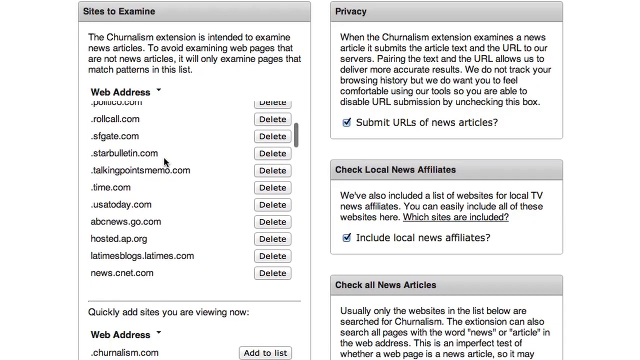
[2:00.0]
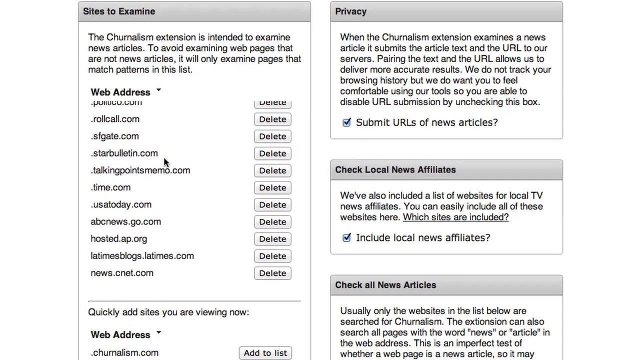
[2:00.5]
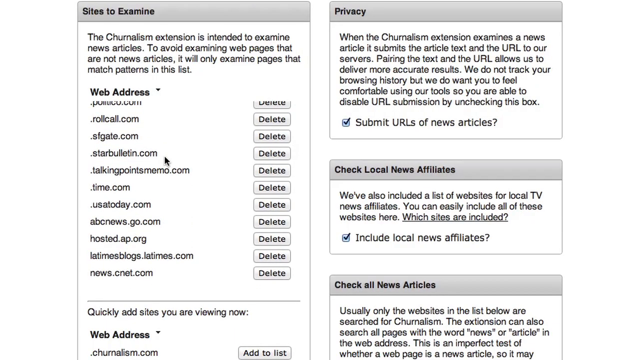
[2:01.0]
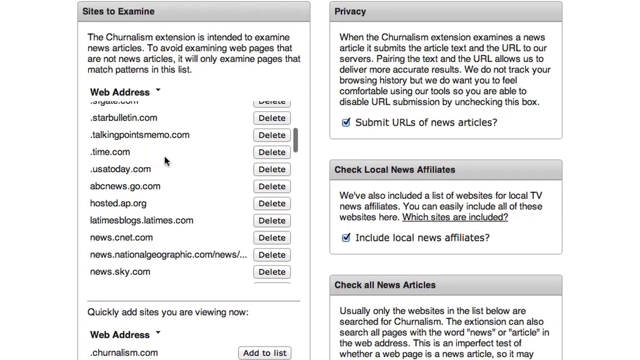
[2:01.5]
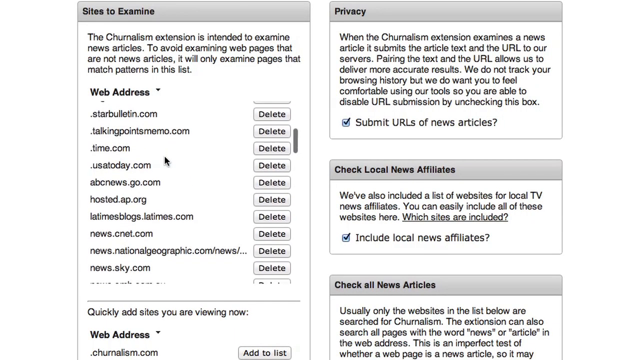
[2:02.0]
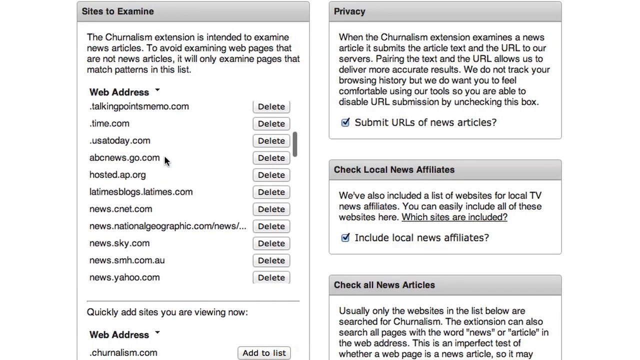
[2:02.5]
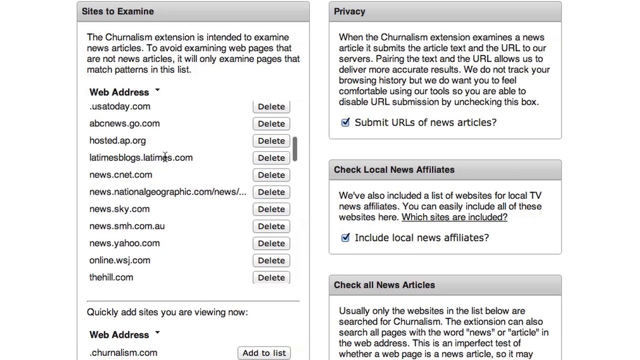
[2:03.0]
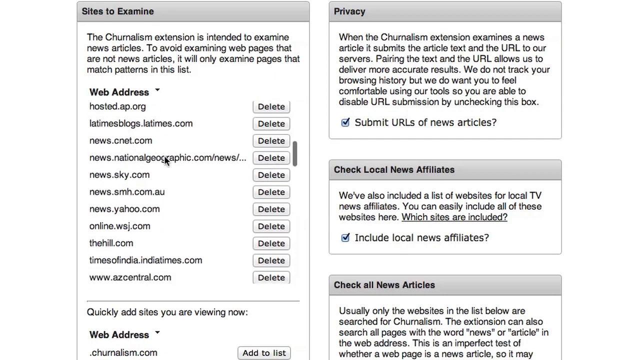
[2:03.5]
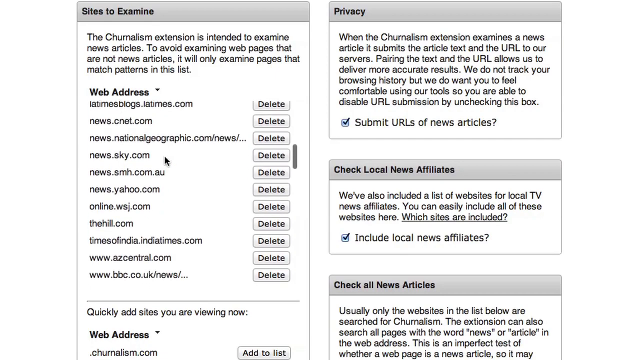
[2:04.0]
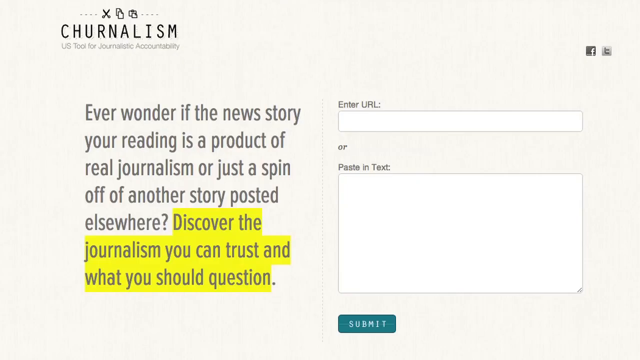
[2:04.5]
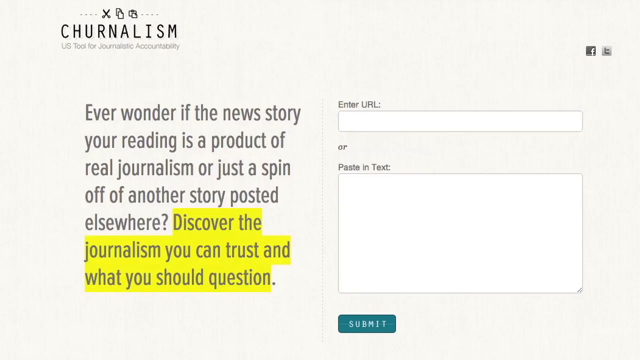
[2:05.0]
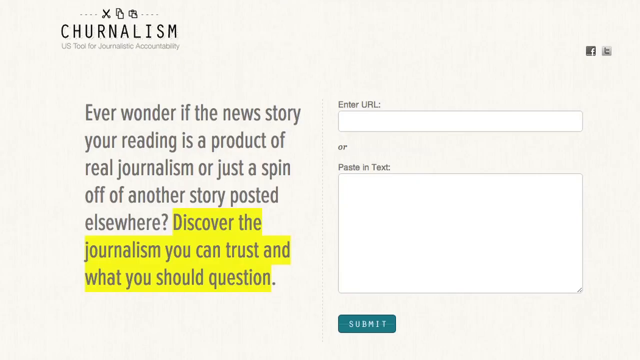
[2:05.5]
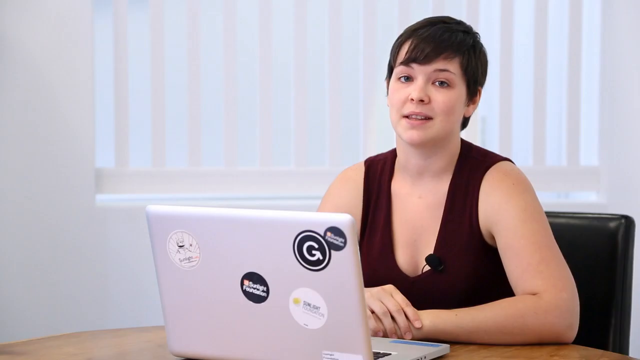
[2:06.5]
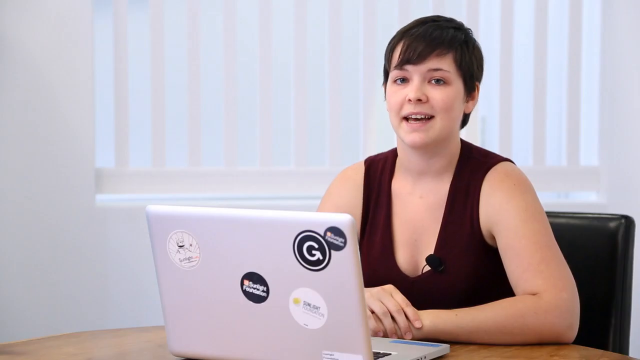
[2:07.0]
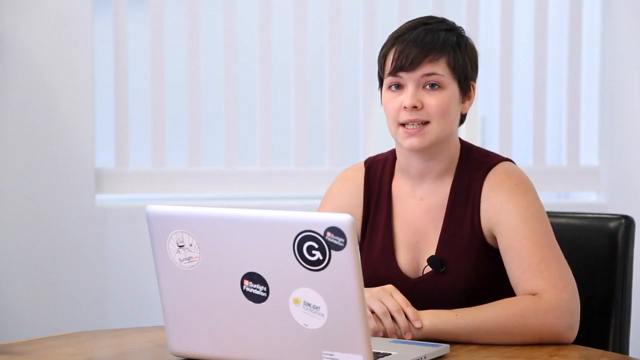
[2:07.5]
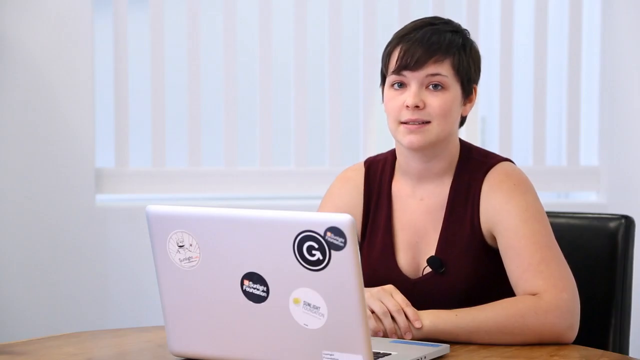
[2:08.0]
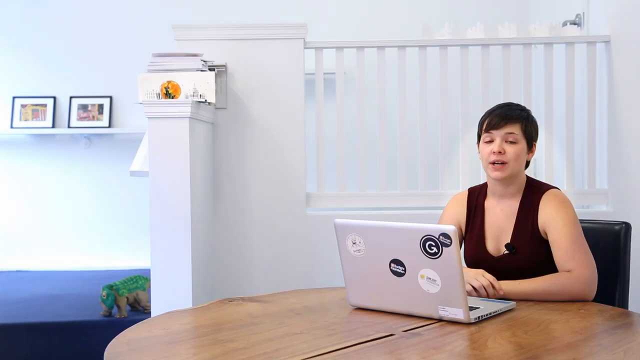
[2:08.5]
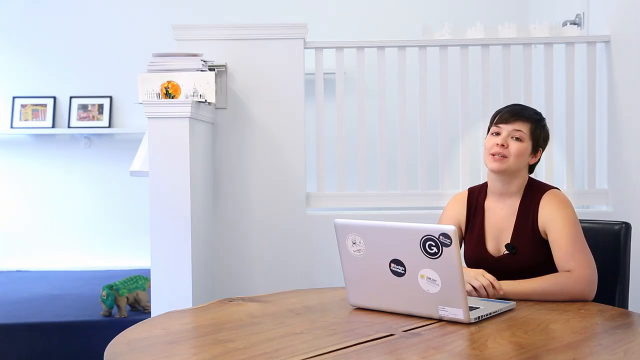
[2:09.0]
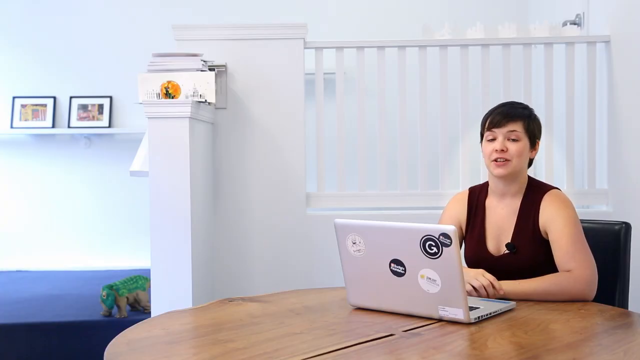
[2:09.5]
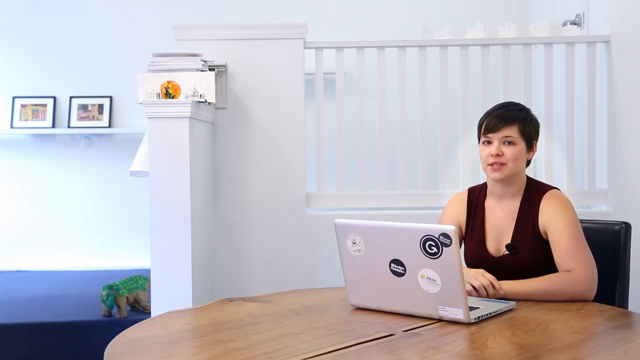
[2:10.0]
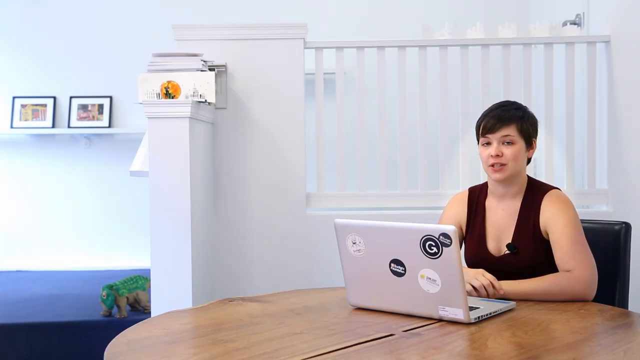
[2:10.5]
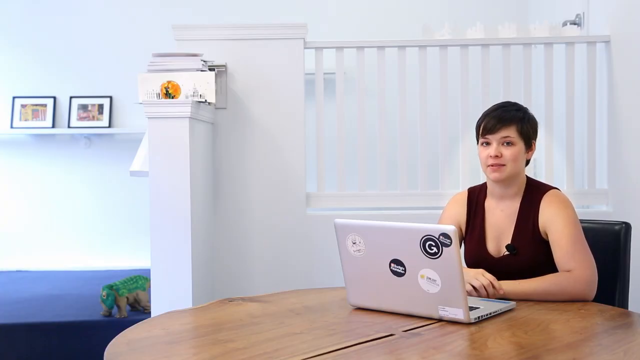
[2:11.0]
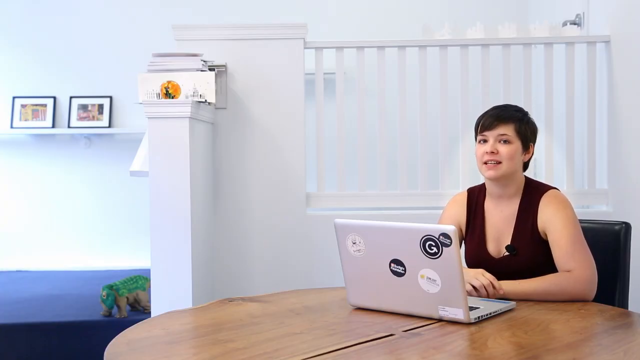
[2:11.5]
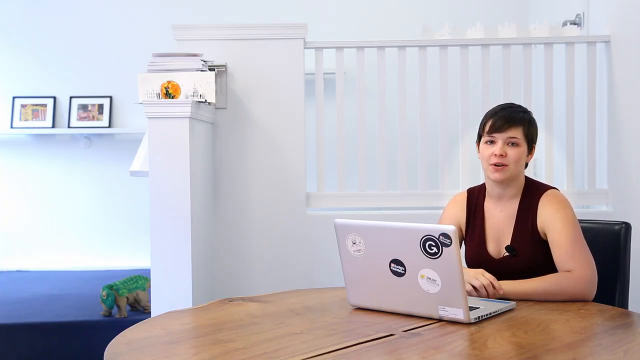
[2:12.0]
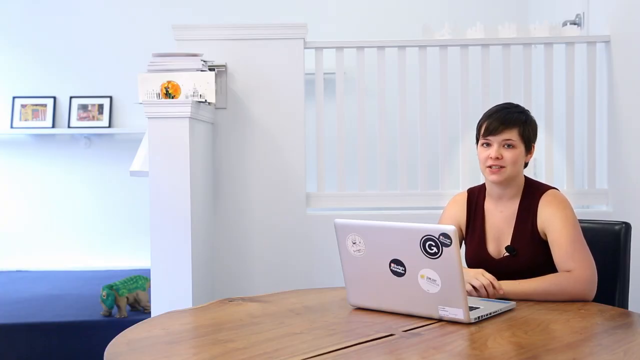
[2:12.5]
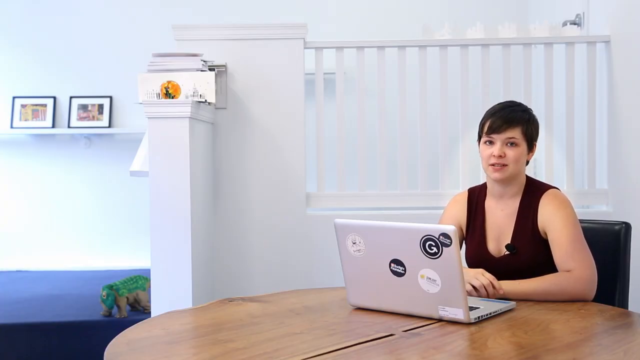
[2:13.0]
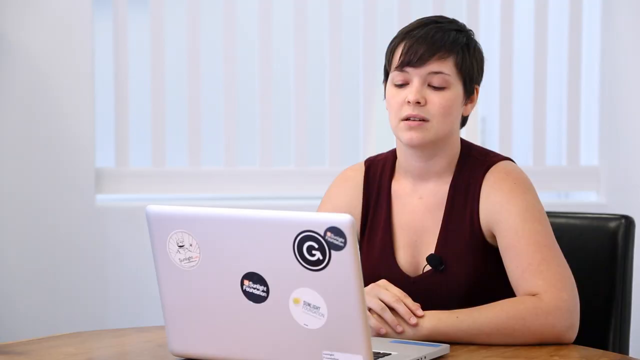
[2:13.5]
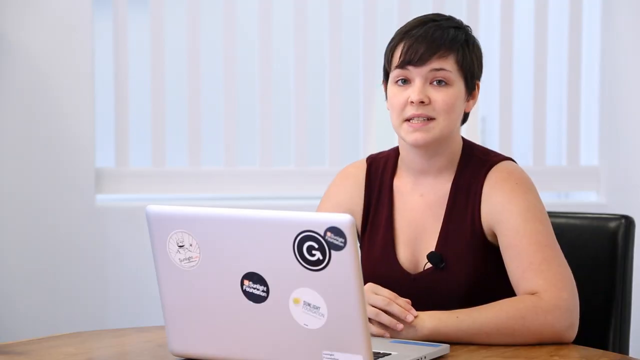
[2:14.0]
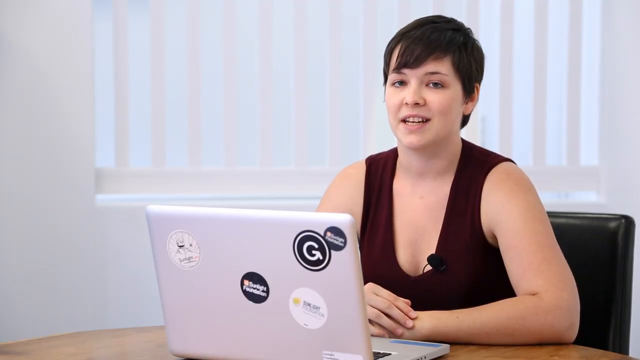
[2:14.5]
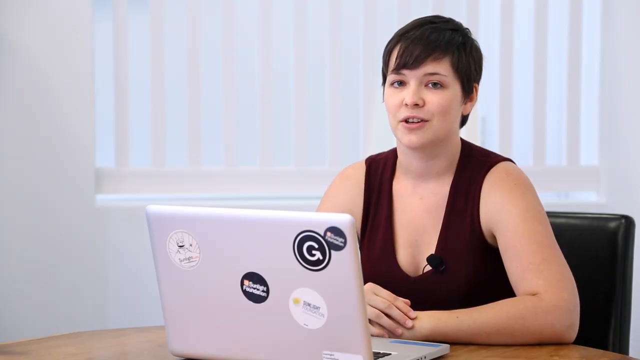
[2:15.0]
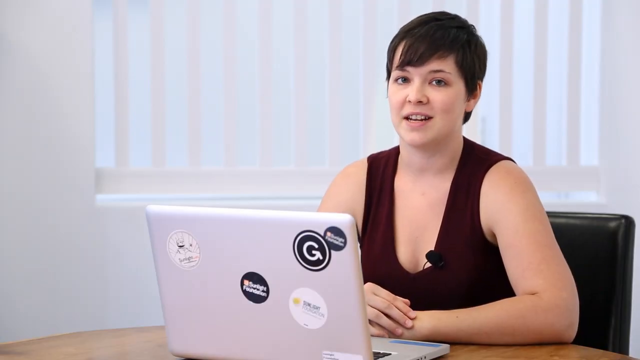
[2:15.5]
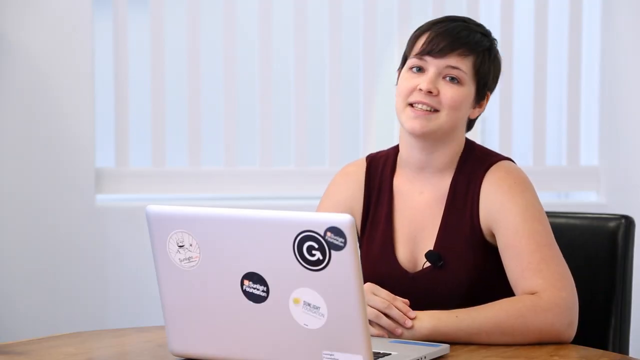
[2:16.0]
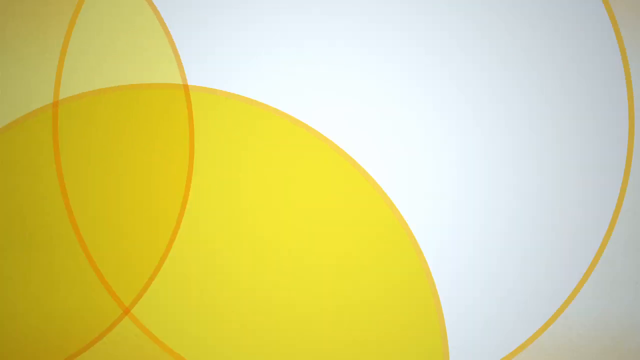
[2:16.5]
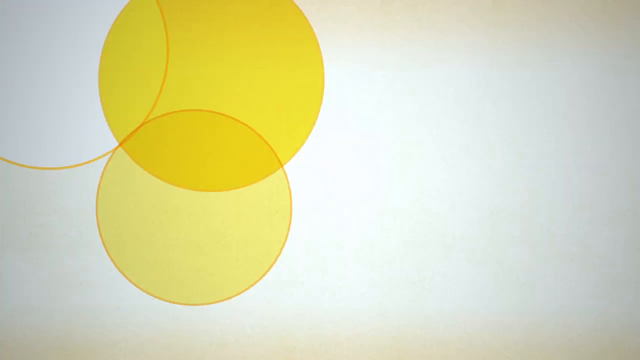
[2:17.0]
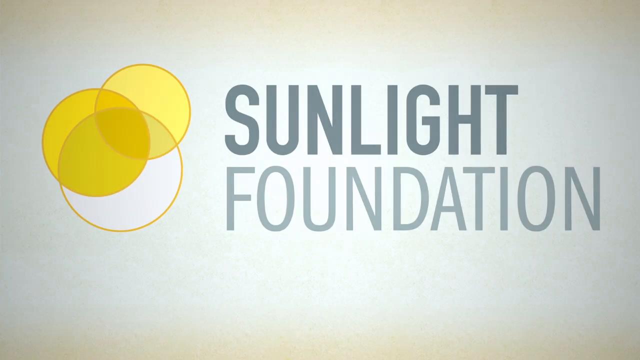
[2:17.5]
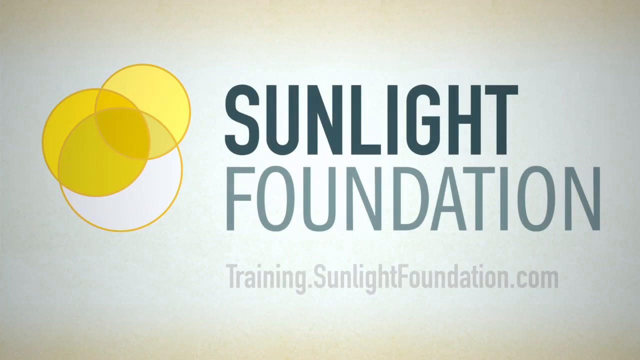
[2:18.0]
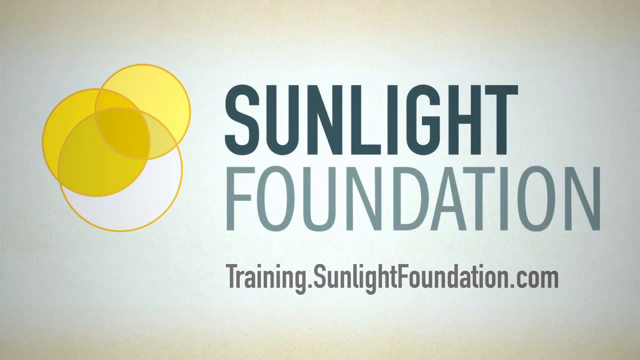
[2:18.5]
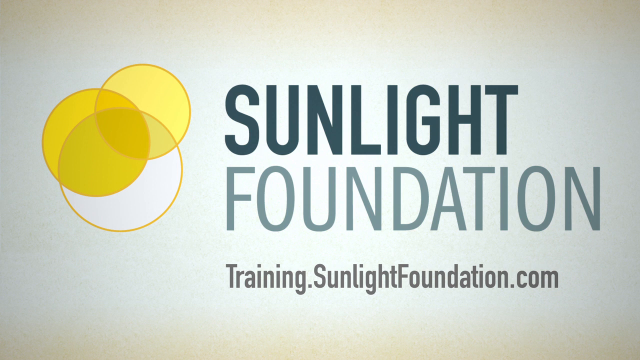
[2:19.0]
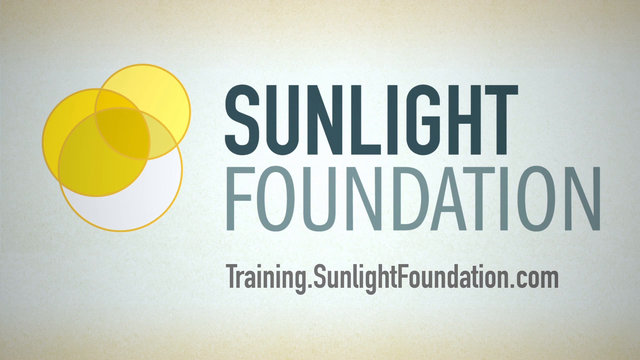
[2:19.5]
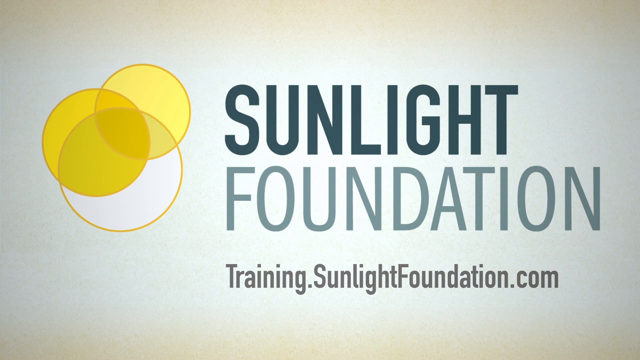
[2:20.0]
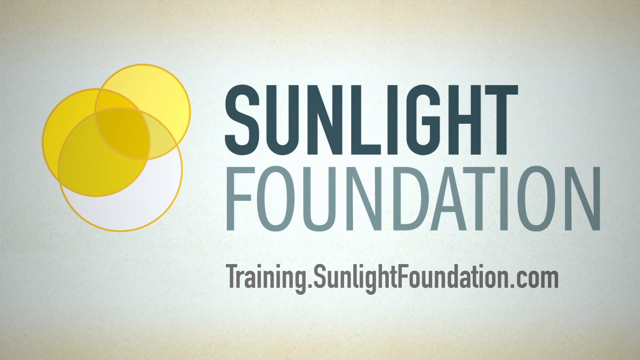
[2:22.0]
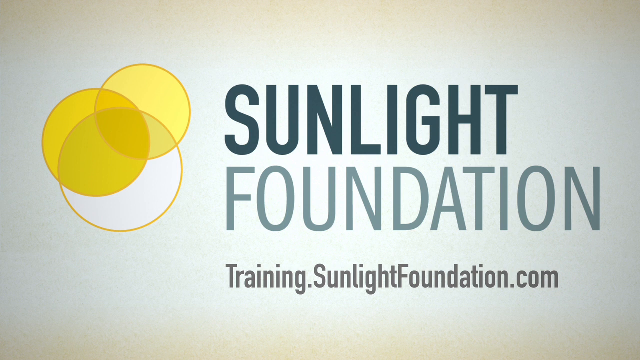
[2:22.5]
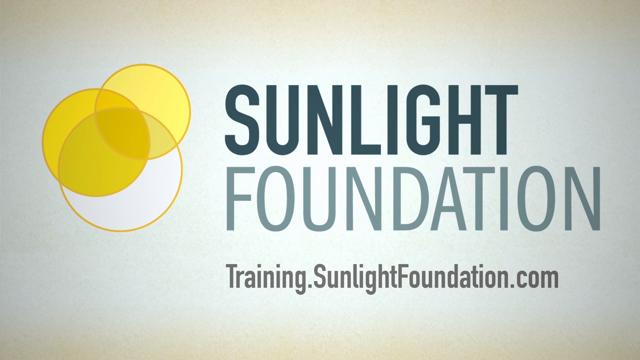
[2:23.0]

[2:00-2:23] Another web page appears as a result of the extension installed in the Chrome browser. It says the extension is intended to examine these articles and that "to avoid examining web pages that are not news articles, it will only examine pages that match patterns in this list," with various websites listed below under "web addresses." A drop-down window holds multiple websites, such as time.com and abcnews.go. The page scrolls down to show more information, and the view pans over to another area. The lady is shown sitting at the table in a black chair, framed from a little above the middle of her back, with text stating "Sunlight Foundation Training." Information about the extension and privacy information is shown documented on the right-hand side.